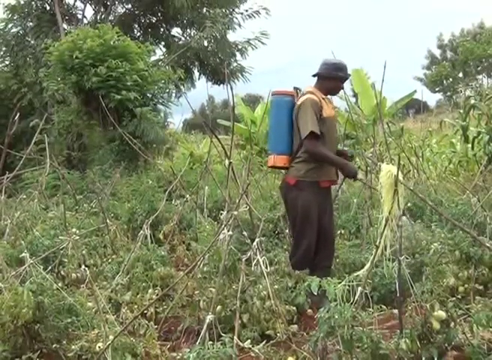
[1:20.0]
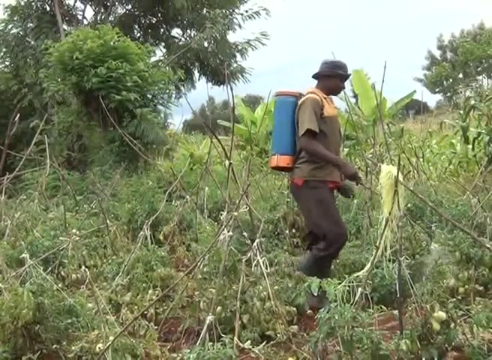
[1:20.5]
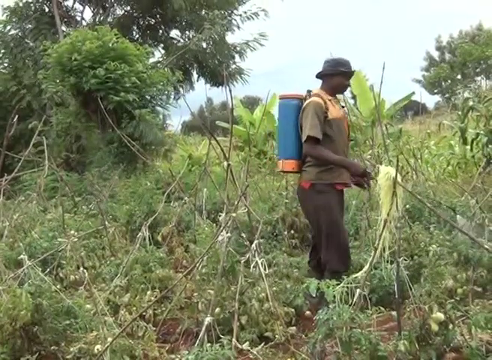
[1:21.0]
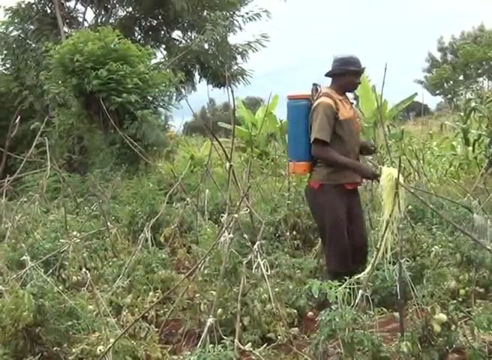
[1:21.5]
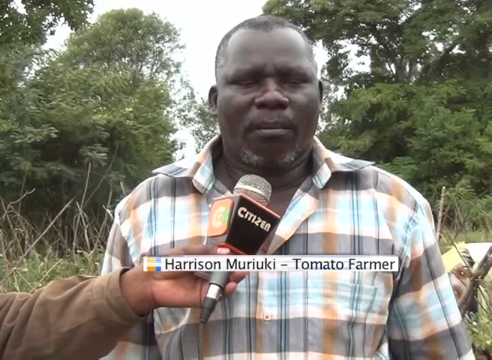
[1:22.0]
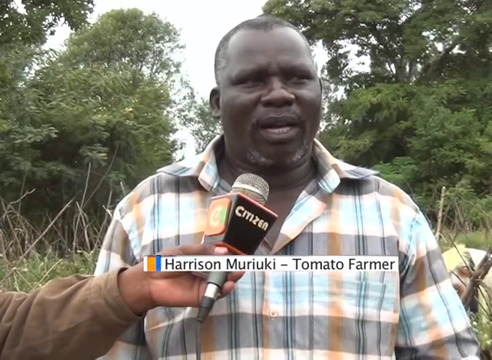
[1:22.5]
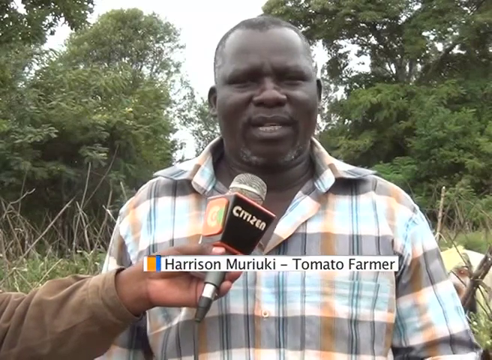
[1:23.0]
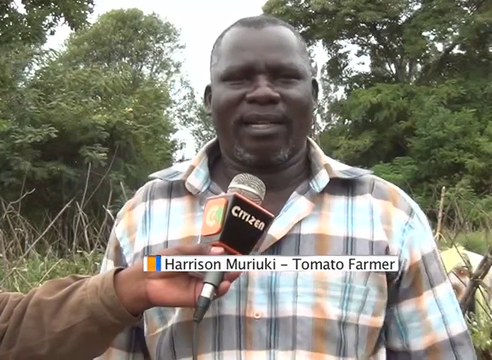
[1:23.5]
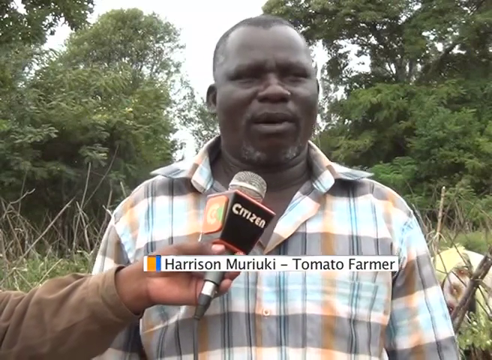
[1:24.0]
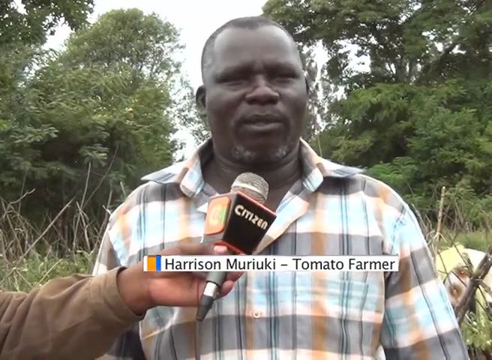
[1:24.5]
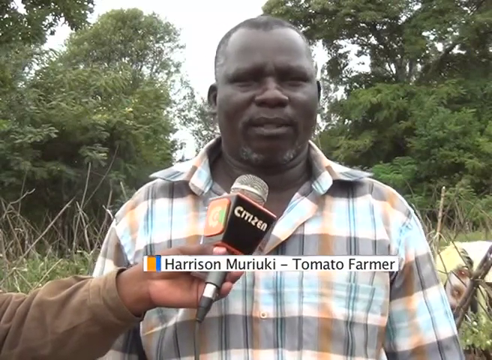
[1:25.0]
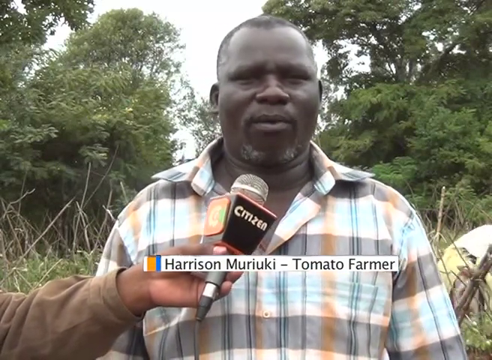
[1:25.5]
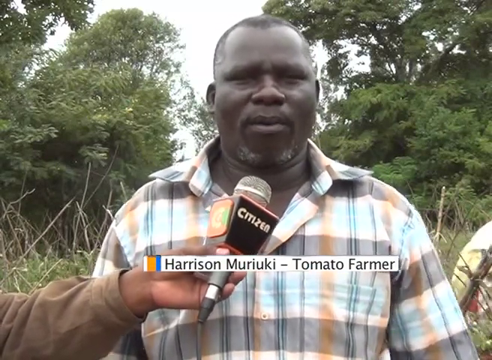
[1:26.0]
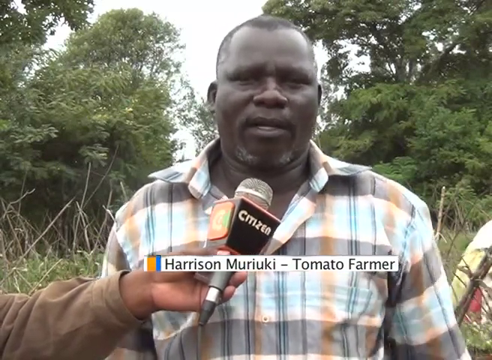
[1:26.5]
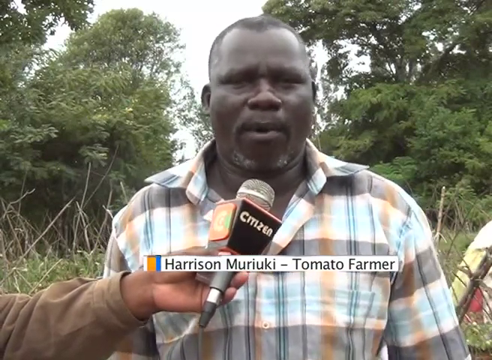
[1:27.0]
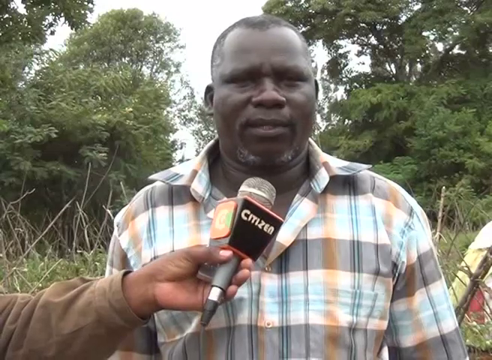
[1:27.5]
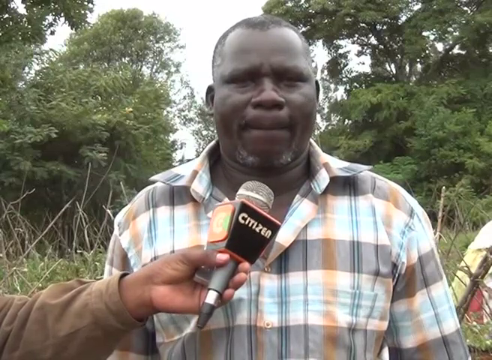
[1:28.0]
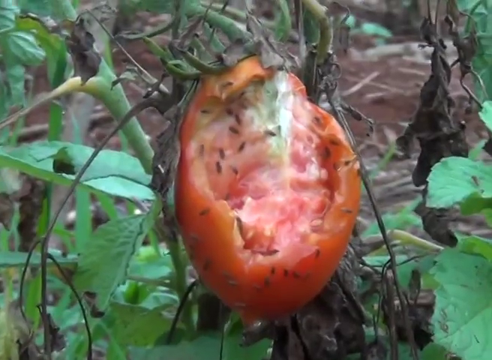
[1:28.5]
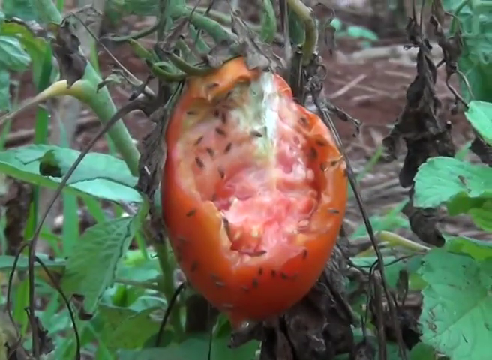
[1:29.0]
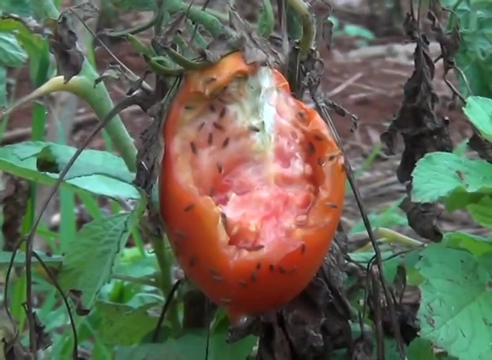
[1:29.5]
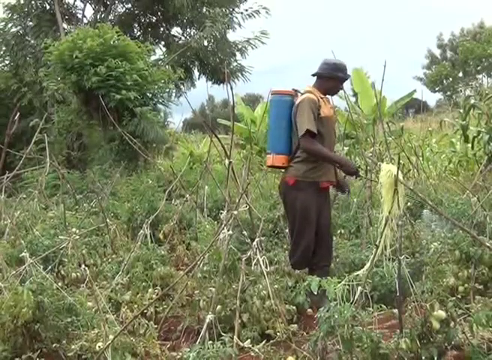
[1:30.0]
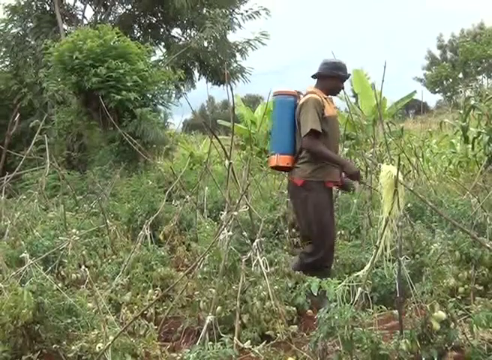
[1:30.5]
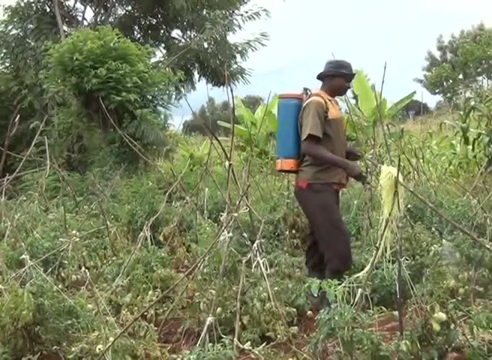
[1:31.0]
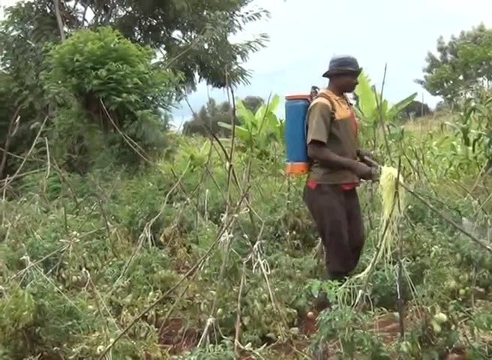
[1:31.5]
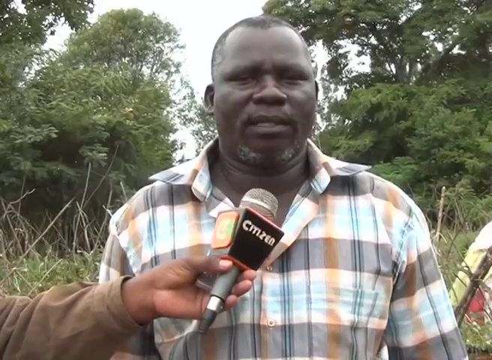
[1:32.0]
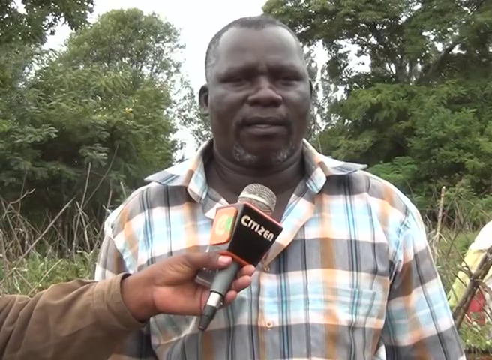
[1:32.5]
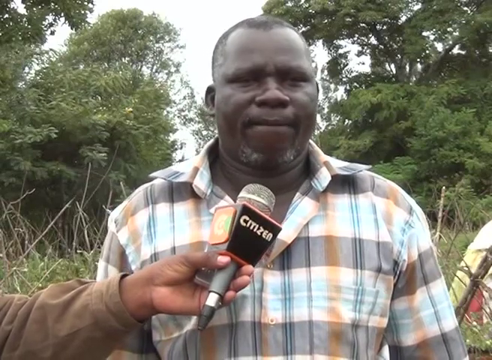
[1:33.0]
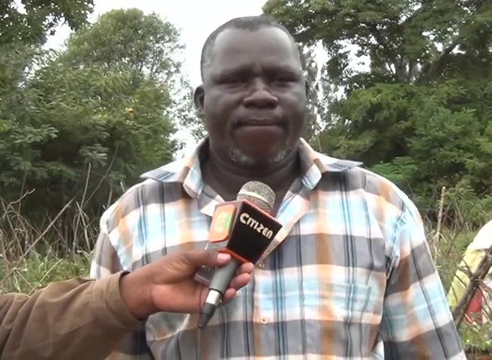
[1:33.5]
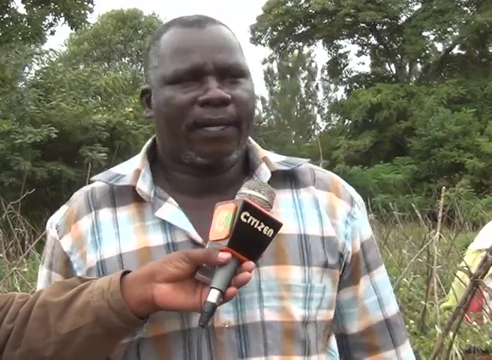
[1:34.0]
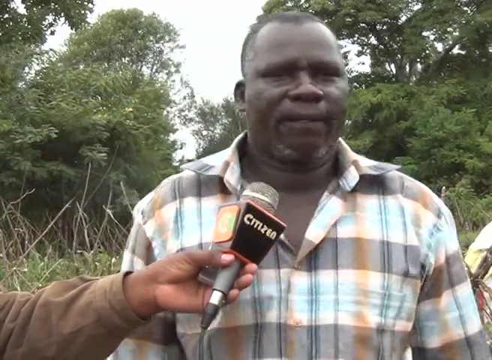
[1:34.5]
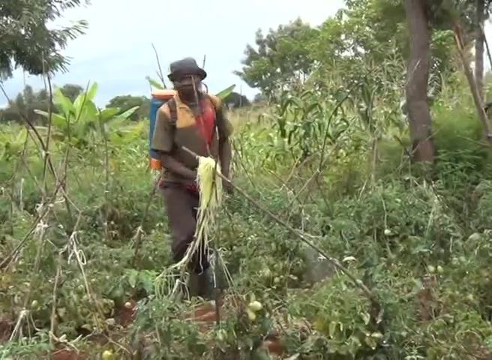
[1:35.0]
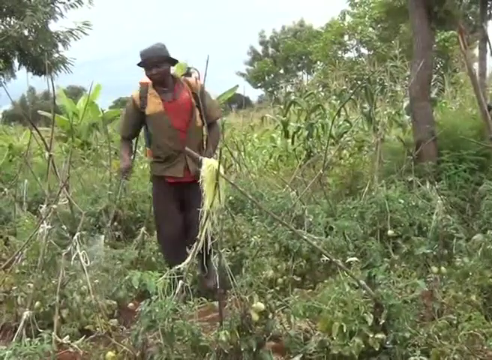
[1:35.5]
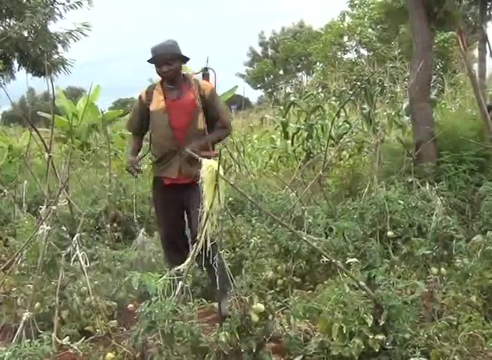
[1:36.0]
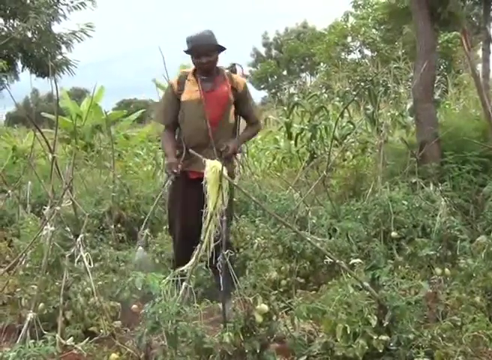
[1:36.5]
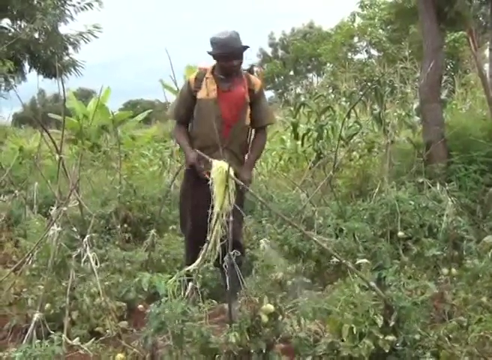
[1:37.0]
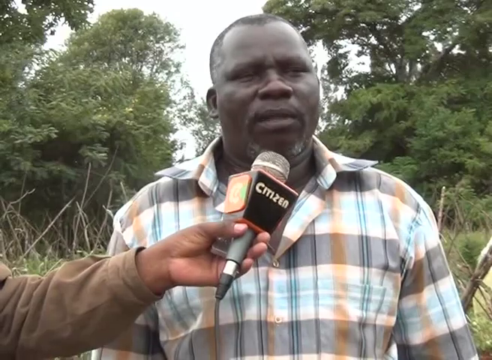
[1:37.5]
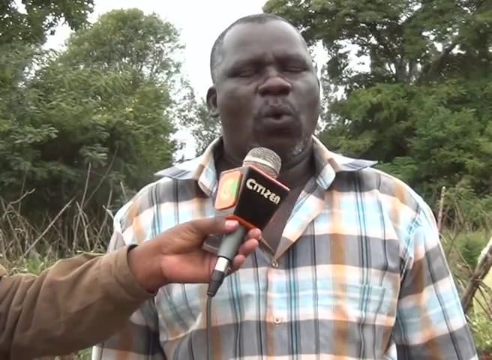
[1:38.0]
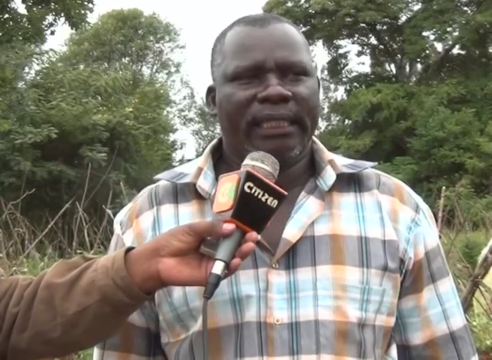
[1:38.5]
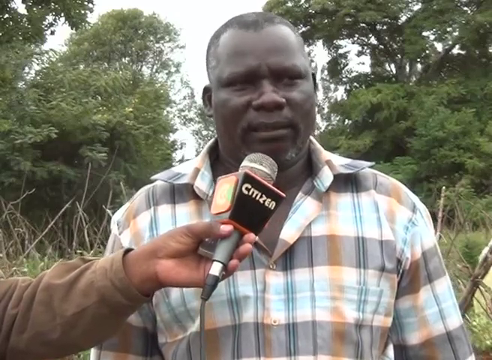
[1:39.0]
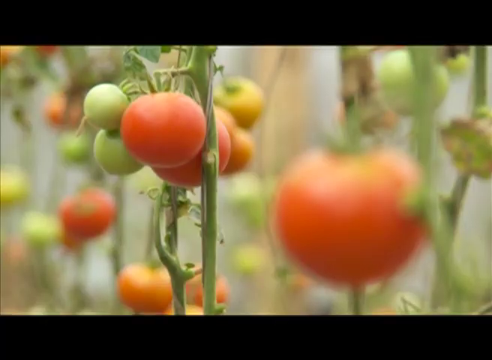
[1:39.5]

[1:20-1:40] A man standing in a field seems to be spraying the plants around him. He wears a brown shirt with orange trim, brown pants and a hat, and has what looks like a blue container strapped to his back. The video cuts to a man in a plaid shirt being interviewed by someone holding a microphone, whose left hand sticks out from the side of the screen. Black text underneath shows the interviewed man's name and reads "tomato farmer". Green trees are in the background. Next, a tomato hangs from a vine; its skin seems to be missing, it is rotting, and many fruit flies are on it. The video cuts back to the man spraying the tomato plants, then to the man being interviewed, then shows the man spraying part of the field, going back and forth between them. A vine with red and green tomatoes hanging from it also appears.